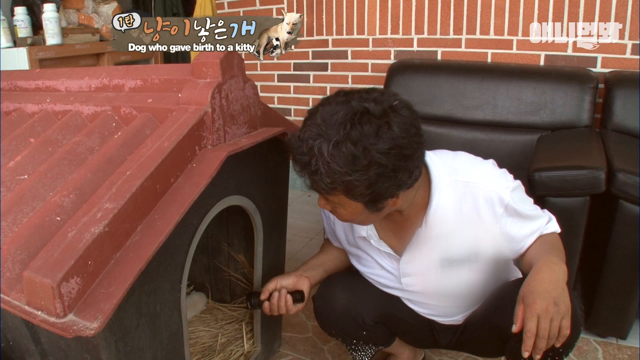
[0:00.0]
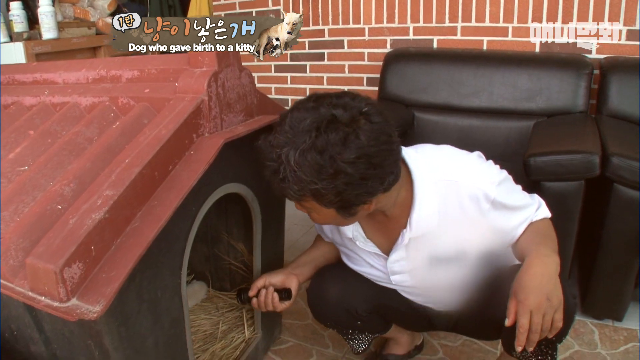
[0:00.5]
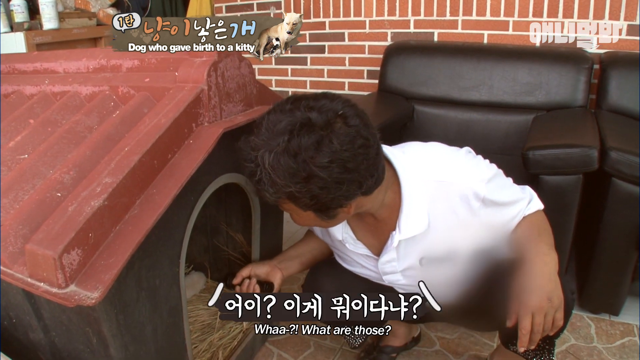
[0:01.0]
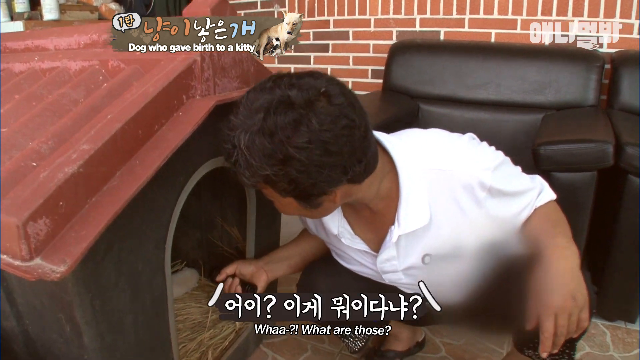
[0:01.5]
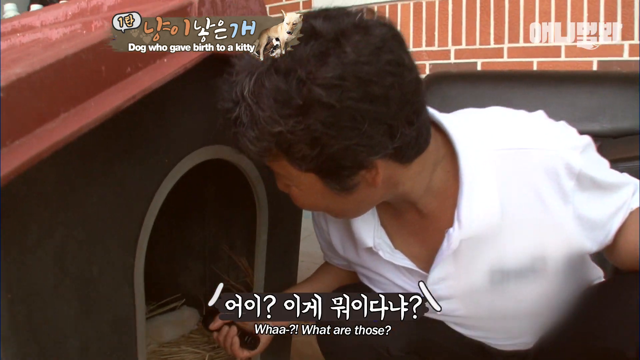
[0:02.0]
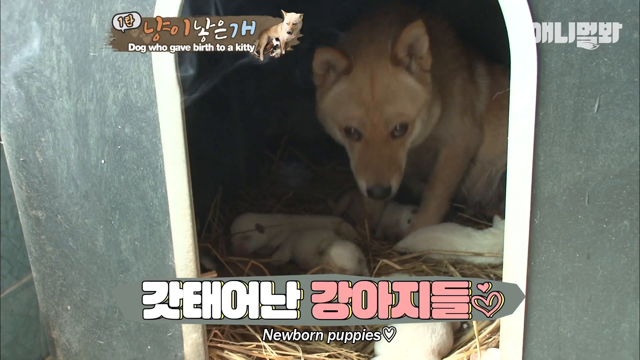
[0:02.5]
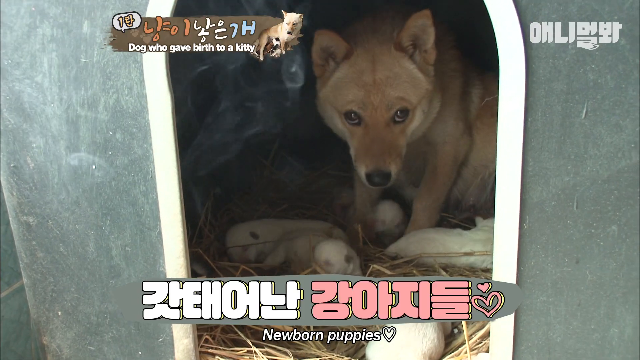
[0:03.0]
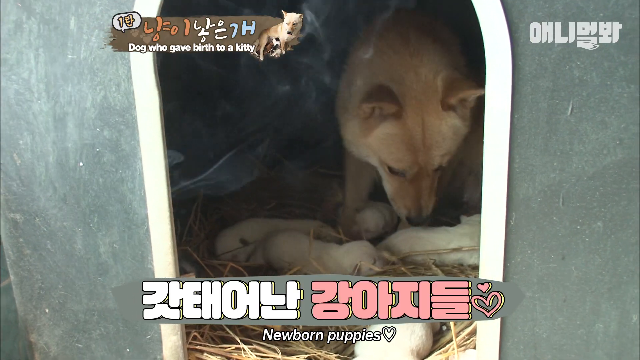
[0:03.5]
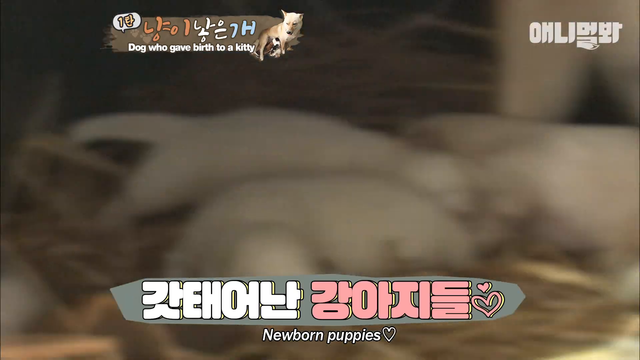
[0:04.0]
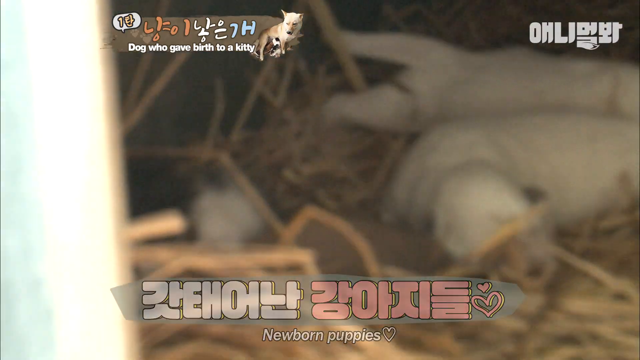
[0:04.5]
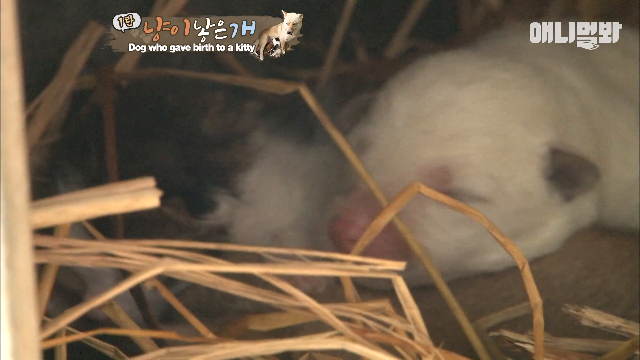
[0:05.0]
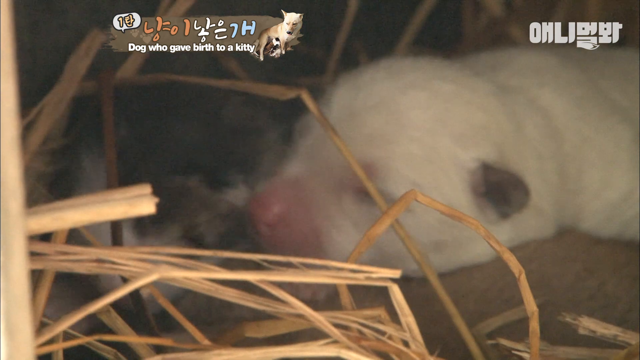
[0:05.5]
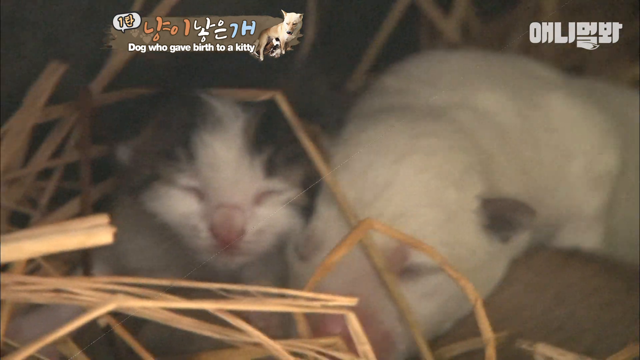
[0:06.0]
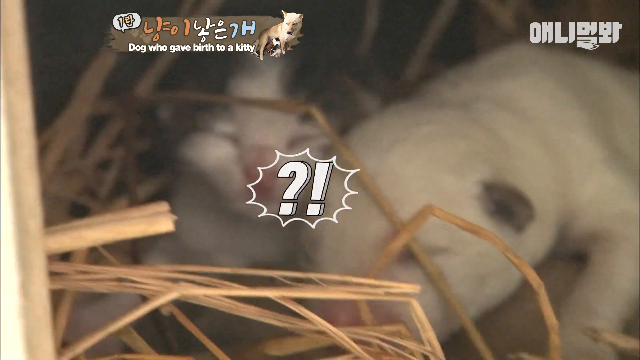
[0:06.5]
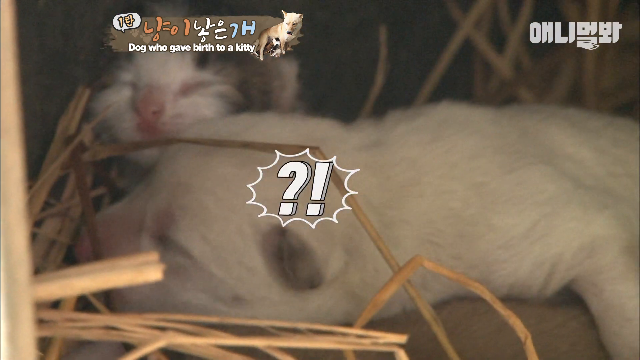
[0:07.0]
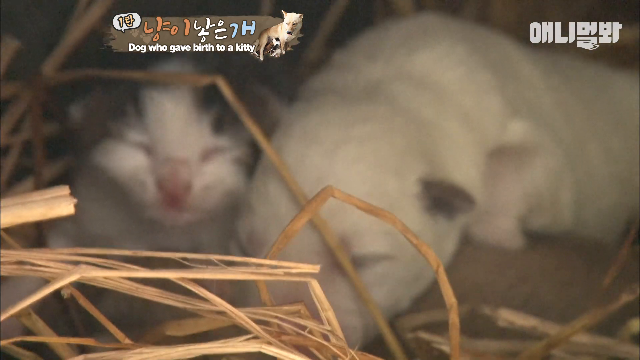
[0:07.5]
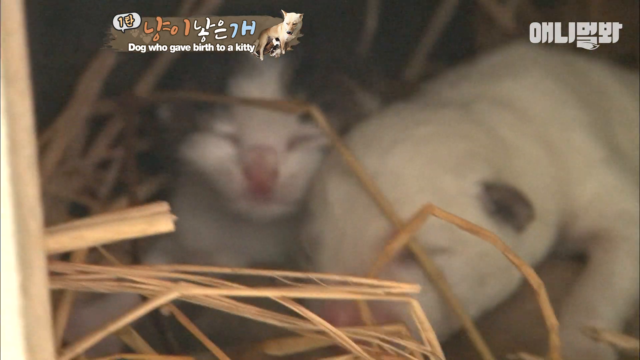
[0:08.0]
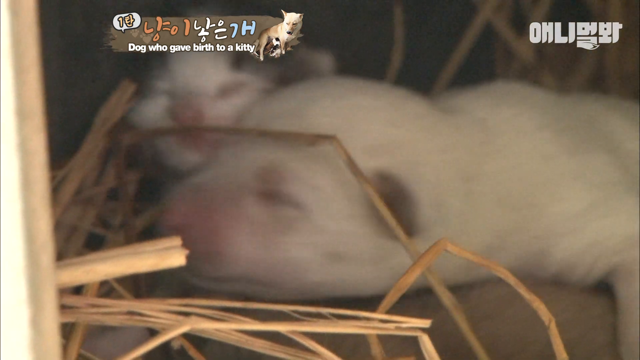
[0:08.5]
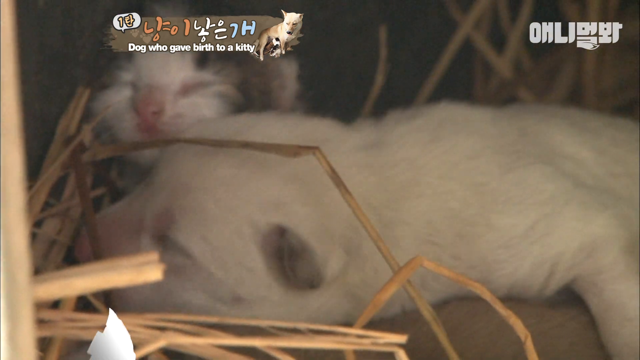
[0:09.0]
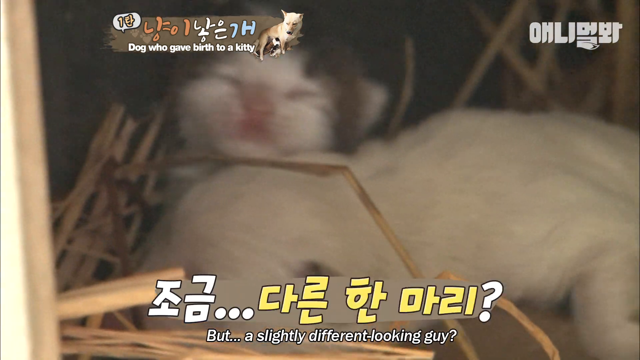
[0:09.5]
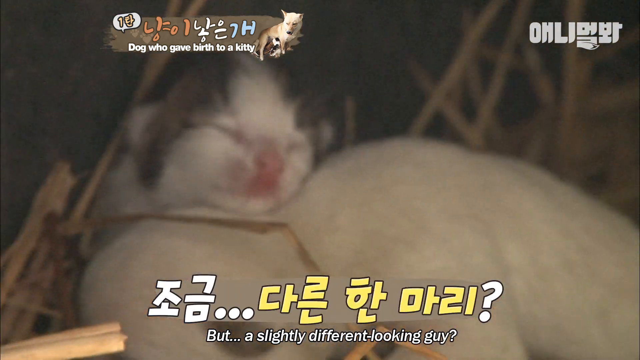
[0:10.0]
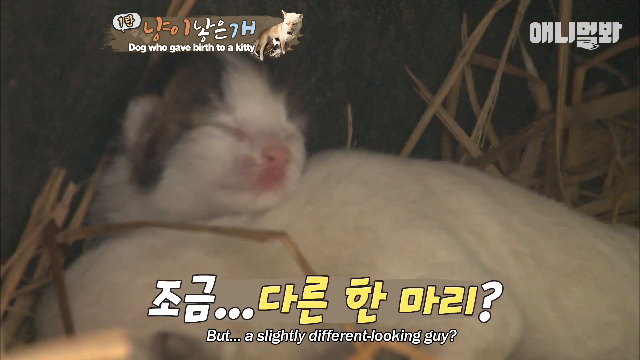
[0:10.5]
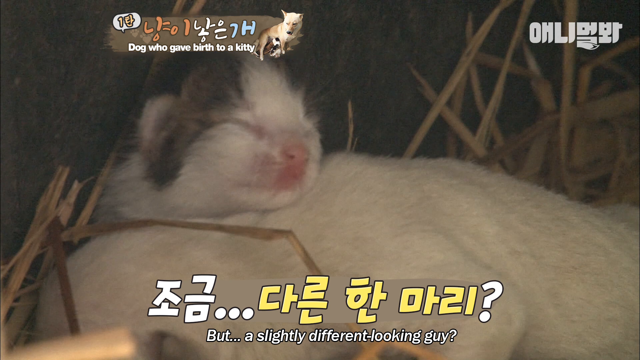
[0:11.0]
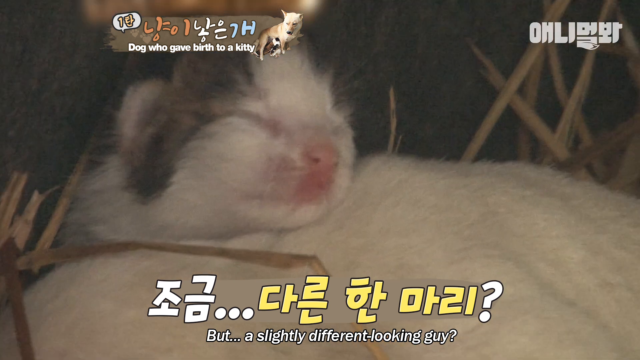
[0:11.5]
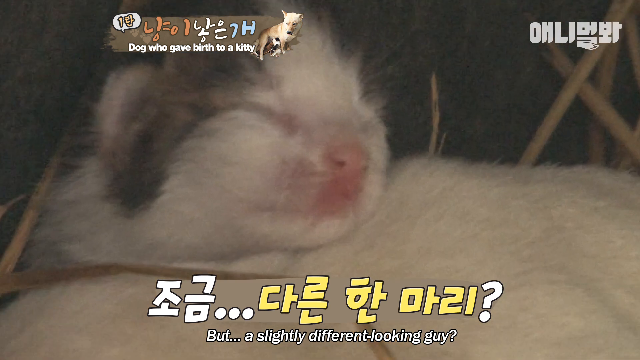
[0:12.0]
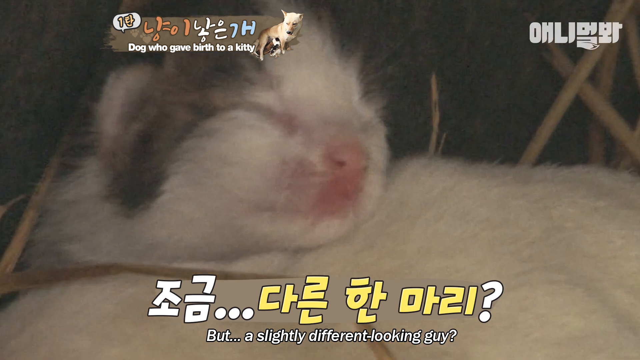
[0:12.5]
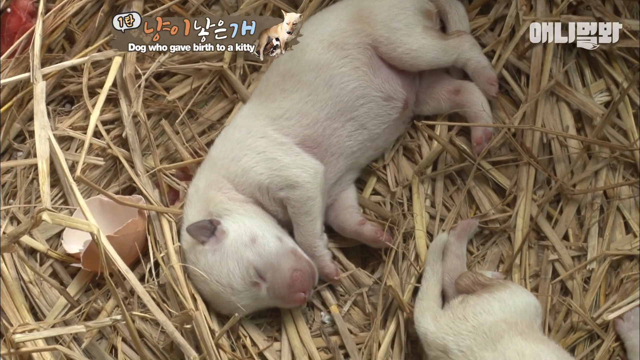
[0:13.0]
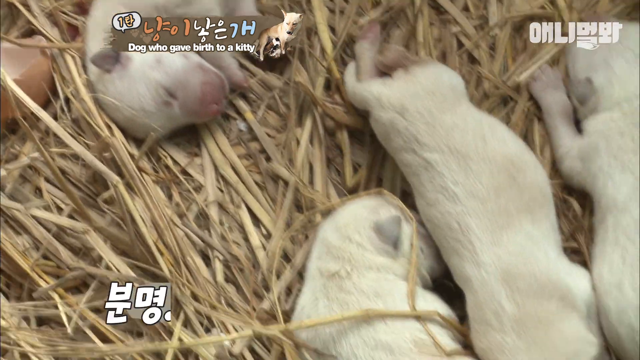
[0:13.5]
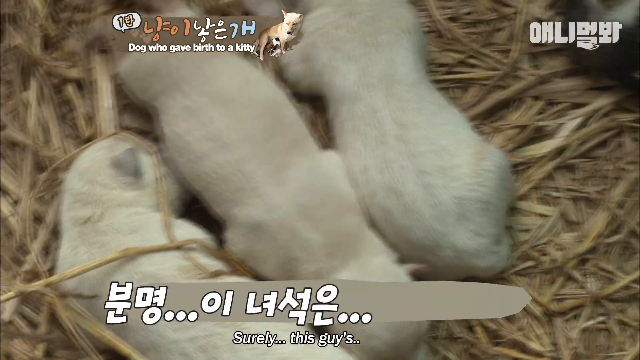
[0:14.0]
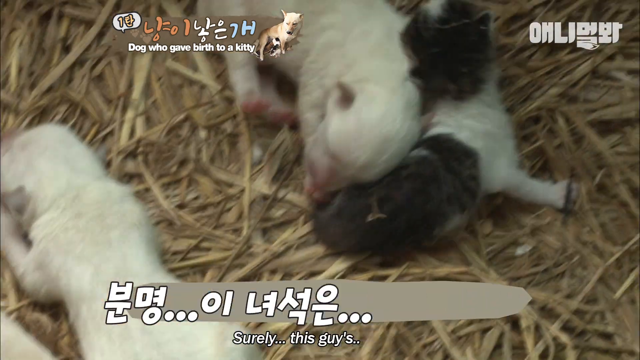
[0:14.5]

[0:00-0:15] What appear to be puppies and kittens are in a little dog house of sorts with straw bedding. There are several of them, and a fully grown dog sits with them, kind of guarding them. Chinese subtitles appear on screen. A man appears for part of the video, using a flashlight to inspect the inside of the dog house, and the animals kind of interact with each other. At some point there is smoke in the frame, though it is not apparent where it comes from. The scene appears to be at the side of a brick house, with a couch next to it, and it appears to be daytime. The setting does not really change; the camera shows it from different angles.